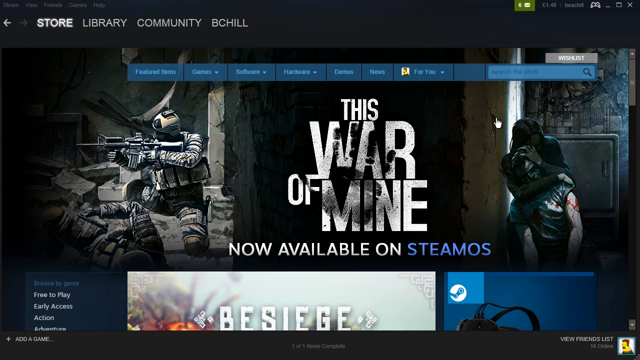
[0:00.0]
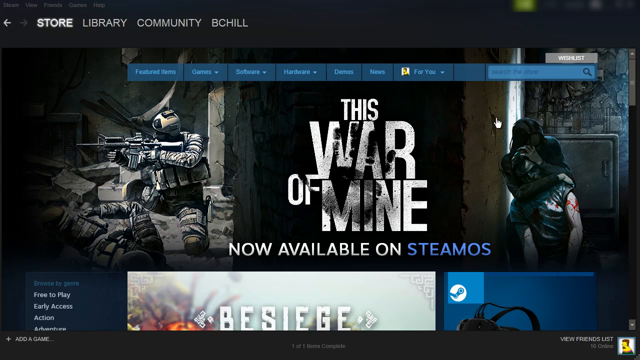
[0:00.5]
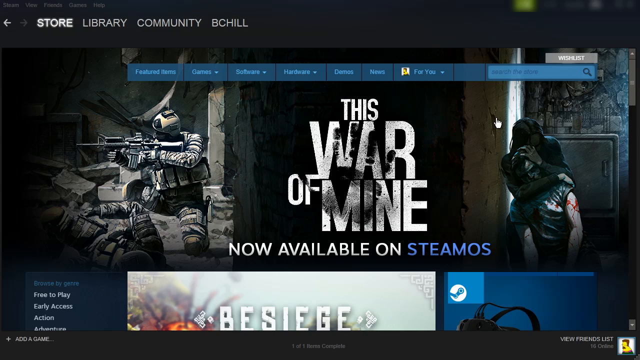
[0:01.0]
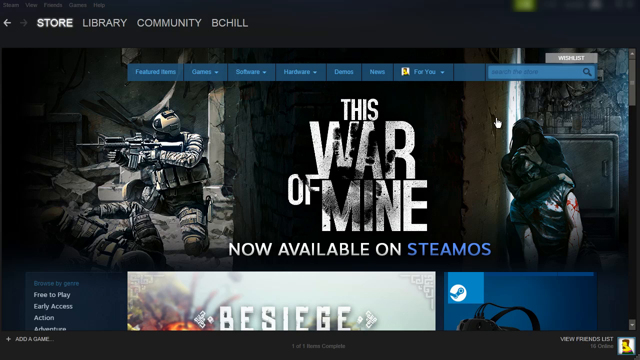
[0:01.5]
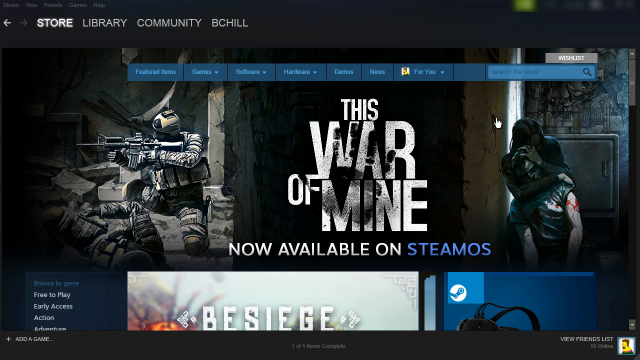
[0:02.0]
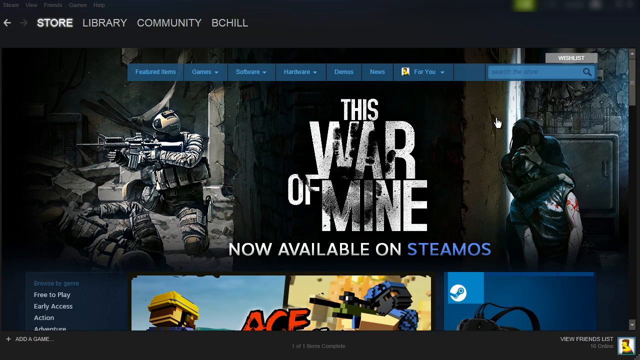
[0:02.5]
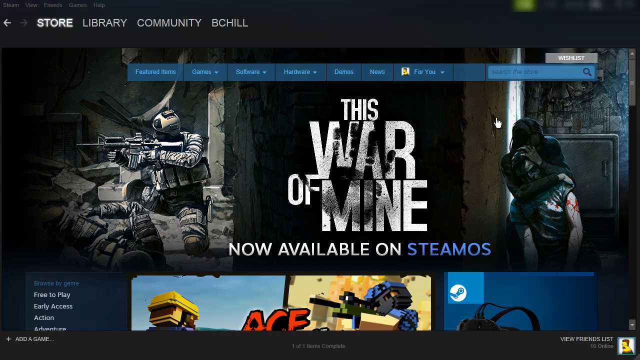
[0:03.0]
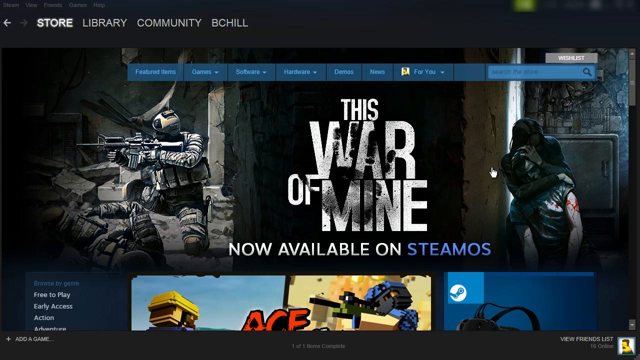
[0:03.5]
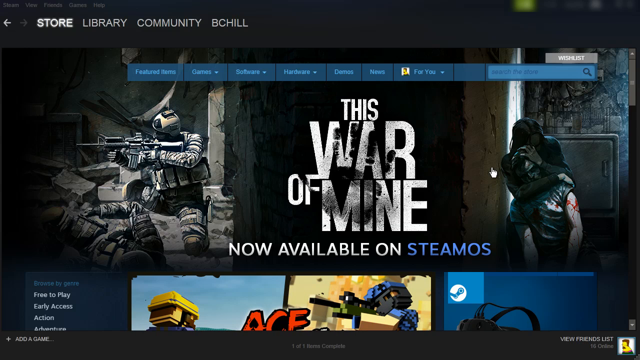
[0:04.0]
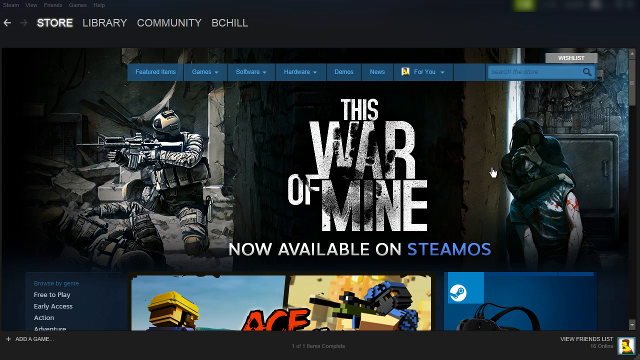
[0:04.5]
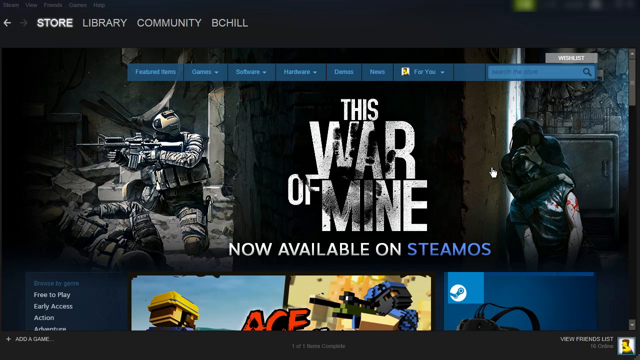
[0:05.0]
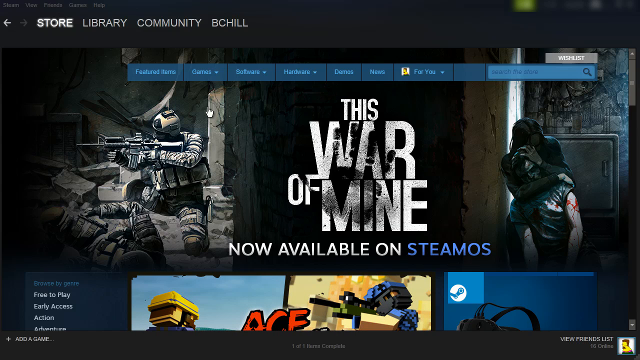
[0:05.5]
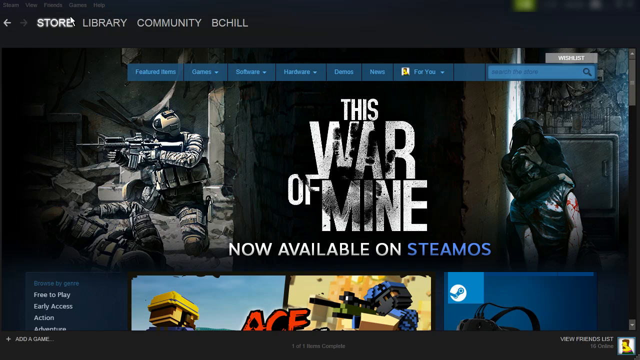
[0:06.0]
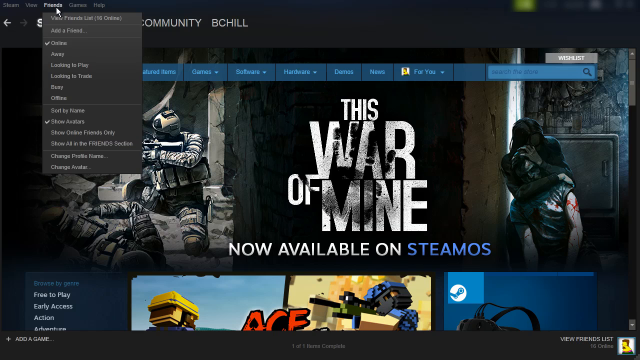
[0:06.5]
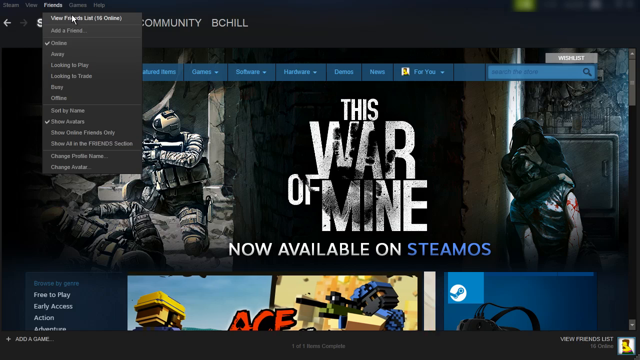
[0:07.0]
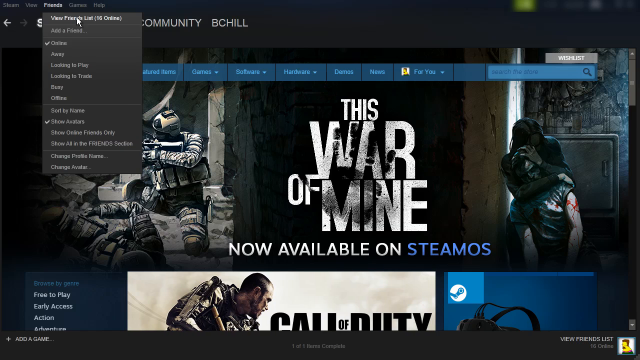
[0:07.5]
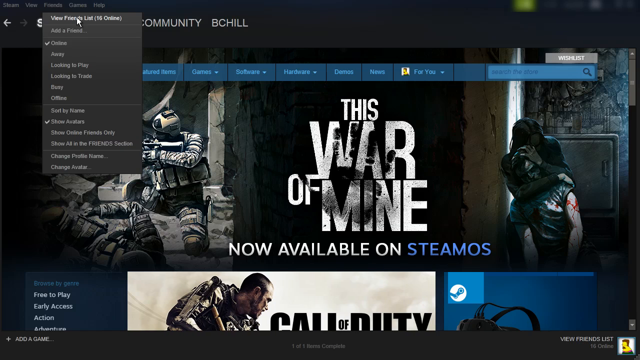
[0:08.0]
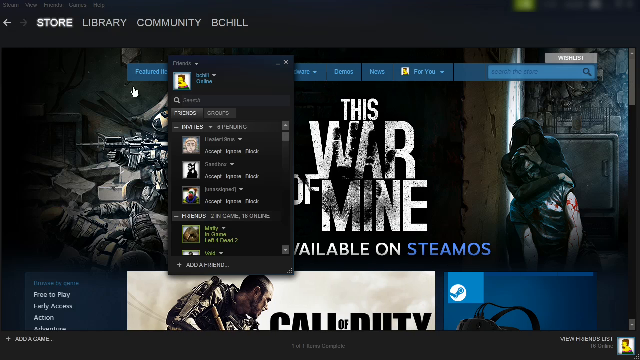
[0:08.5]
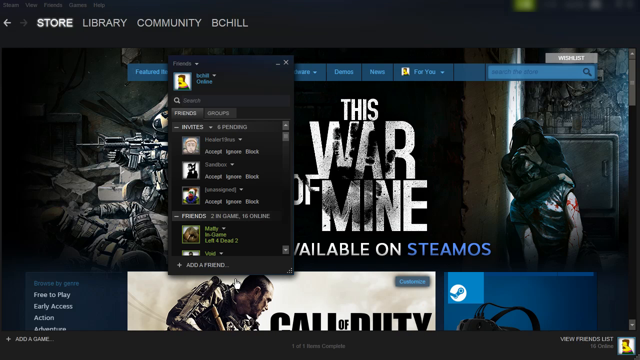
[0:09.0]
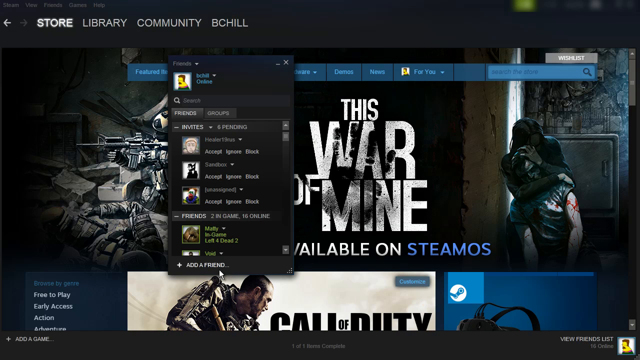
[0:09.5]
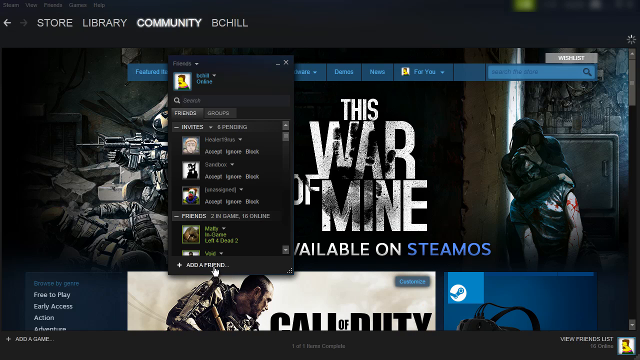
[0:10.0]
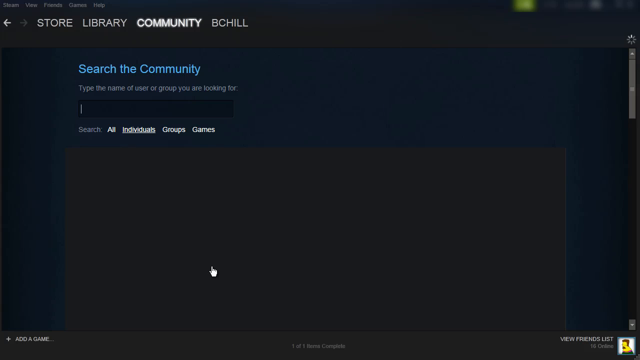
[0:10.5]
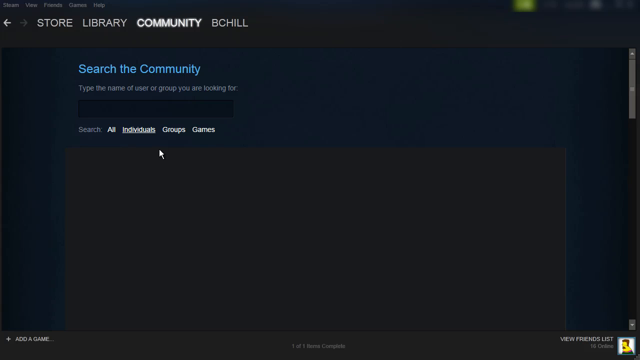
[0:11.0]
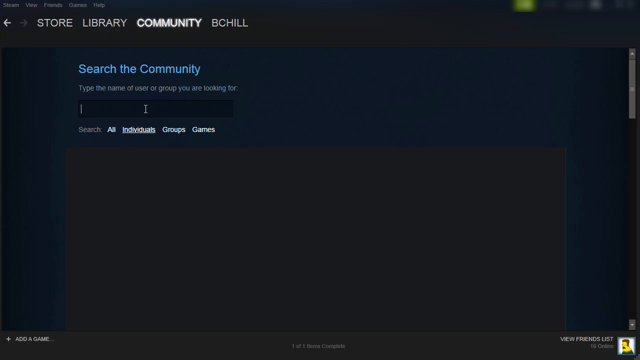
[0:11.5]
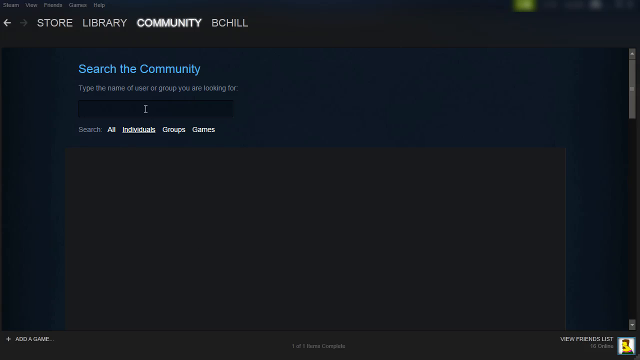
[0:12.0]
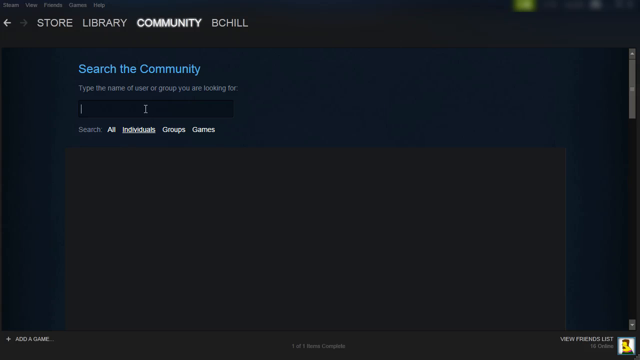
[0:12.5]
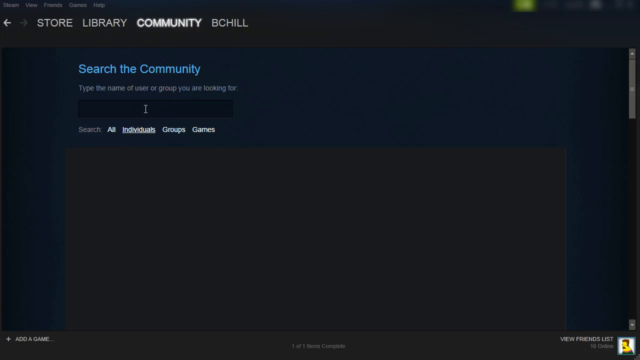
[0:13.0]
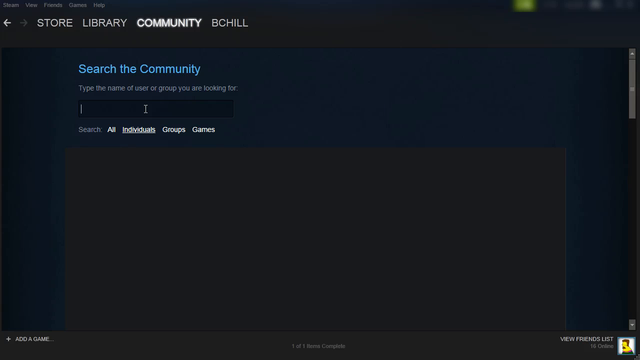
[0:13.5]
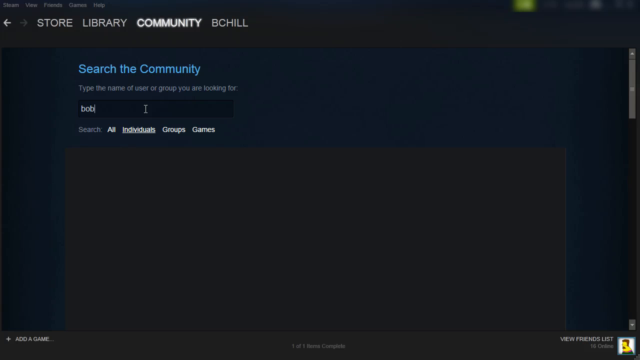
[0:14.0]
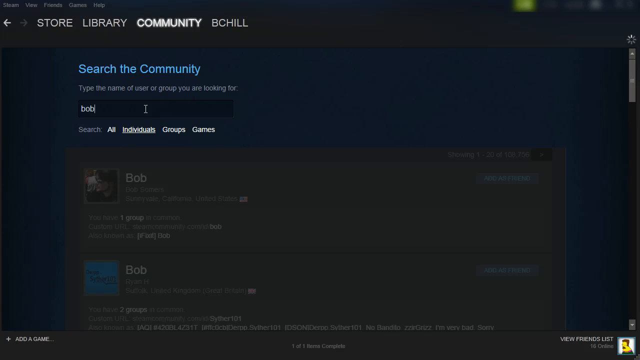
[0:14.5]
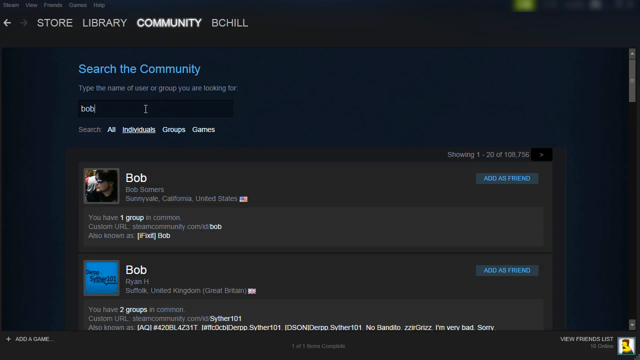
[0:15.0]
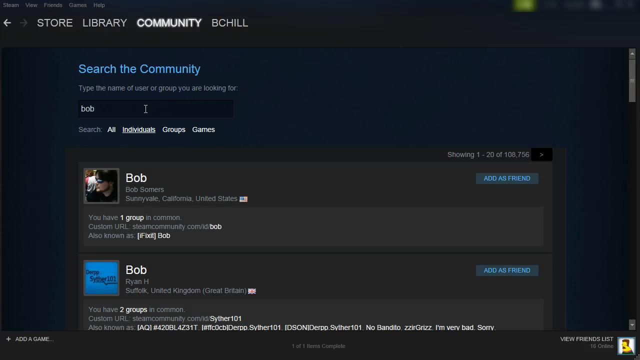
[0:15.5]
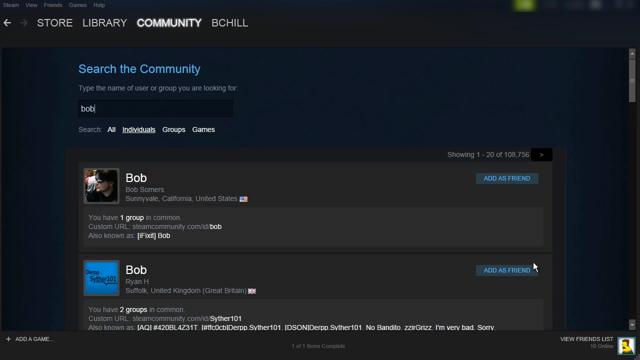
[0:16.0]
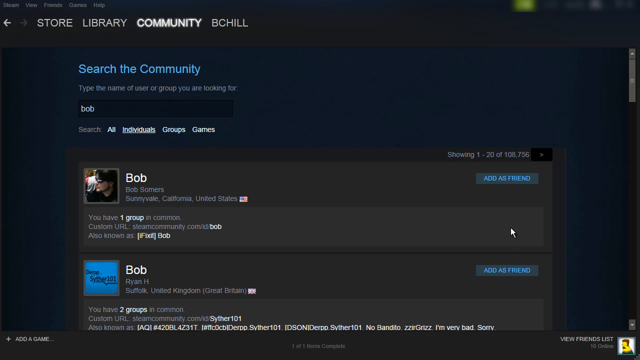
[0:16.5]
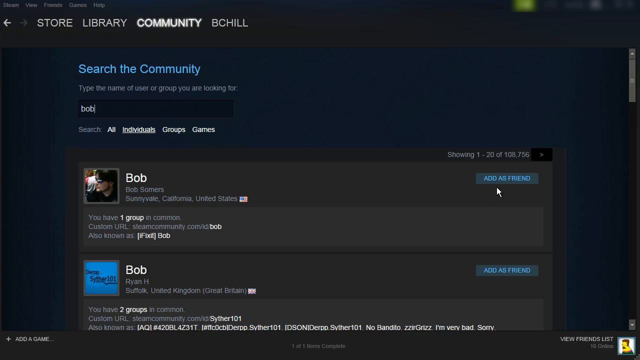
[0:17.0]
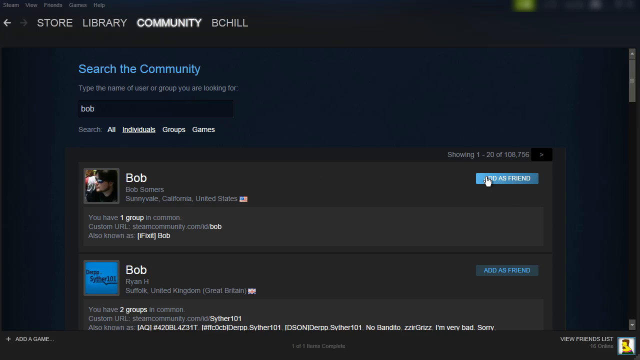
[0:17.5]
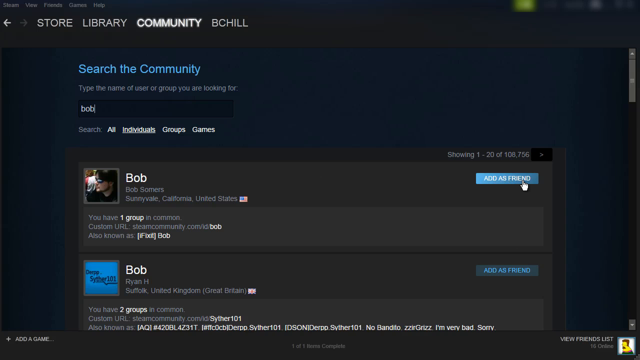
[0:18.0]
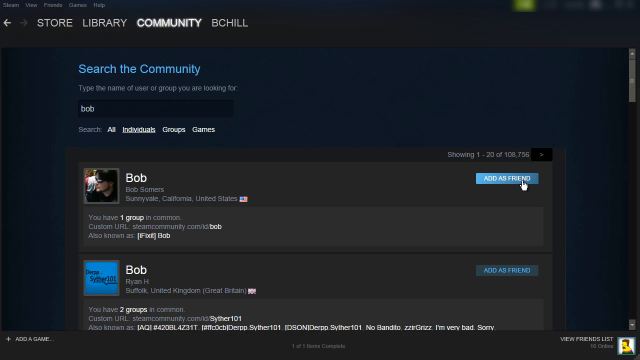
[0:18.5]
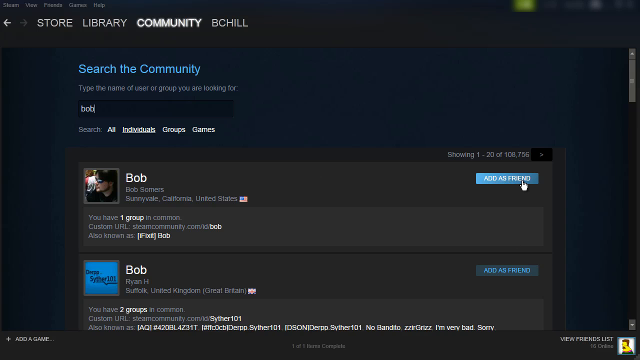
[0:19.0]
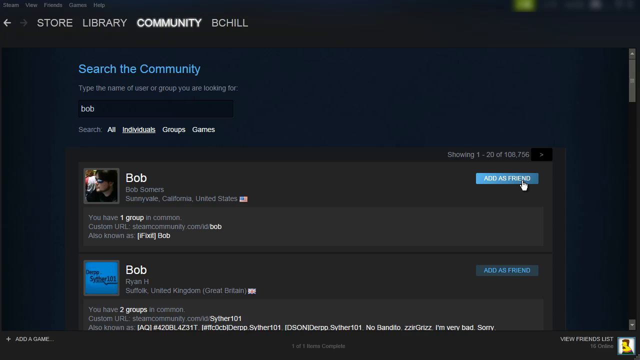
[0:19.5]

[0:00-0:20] A Steam browser is open, and its front page advertises a game called This War of Mine, now available on SteamOS. In the wallpaper, a soldier in full tactical gear on the left kneels and points his gun at something in front of him, while on the right a woman holds an injured man in her arms from behind; they appear to be in a bombed-out apartment. The illustration is very dim and gray. The user goes to the Friends menu selection in the top left corner of the browser and clicks on View Friends List. A separate window pops up showing the friends list of the user, named Beach Hill, whose avatar is a distorted Ned Flanders. The window has two tabs, Friends and Groups, and each friend has an avatar; one of them is a clown. At the very bottom of the window is an Add a Friend selection, which the user clicks. This opens a community window with a search bar, where he types Bob (B-O-B), and the section below populates with people named Bob in the community. The first is Bob Summers from Sunnyvale, California, who has a photo or avatar. The second is Bob from Suffolk, United Kingdom, who has a meme avatar rather than a photo. The user hovers over the Add as Friend button for the first result, Bob from Sunnyvale, California.